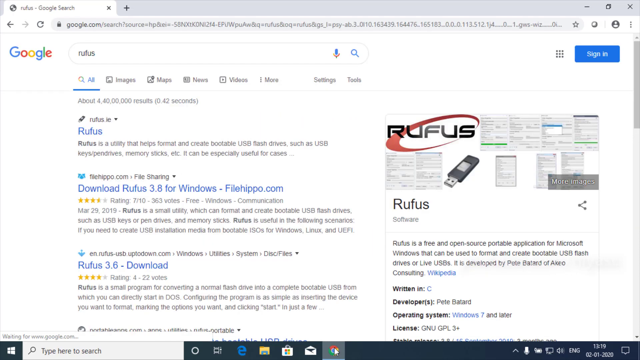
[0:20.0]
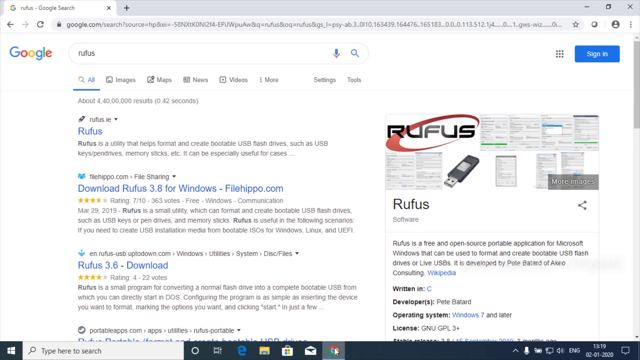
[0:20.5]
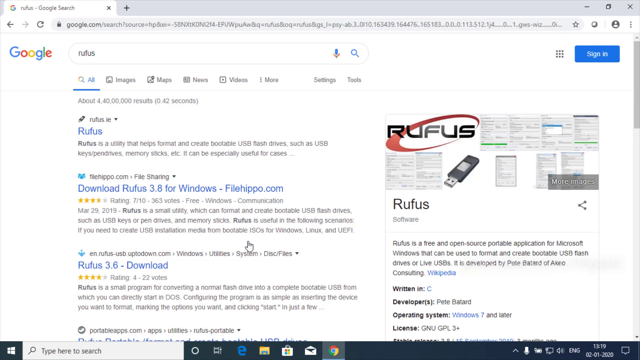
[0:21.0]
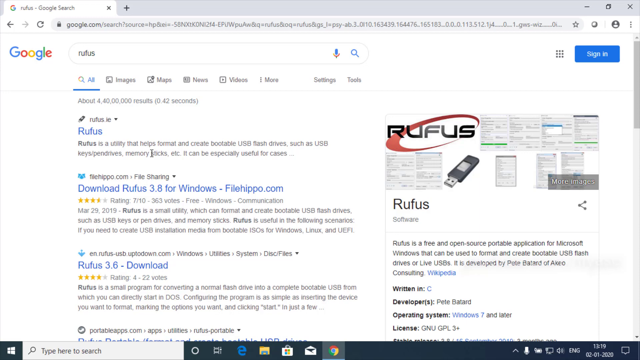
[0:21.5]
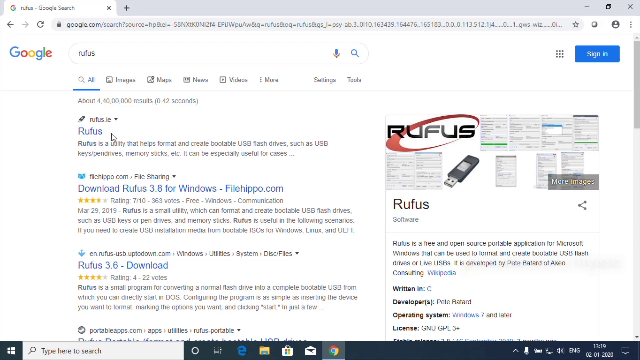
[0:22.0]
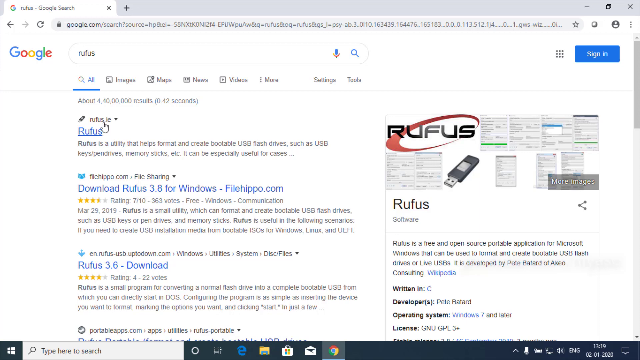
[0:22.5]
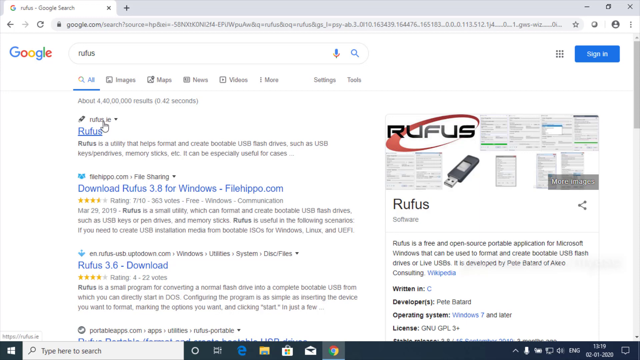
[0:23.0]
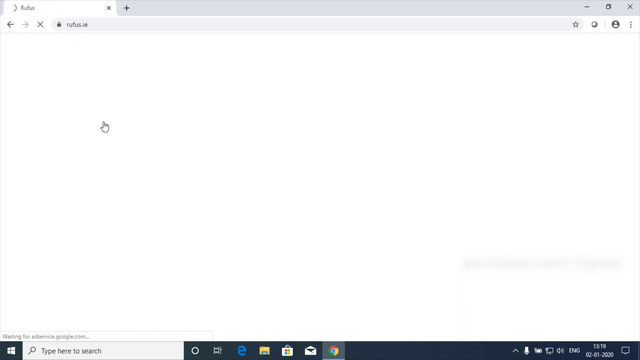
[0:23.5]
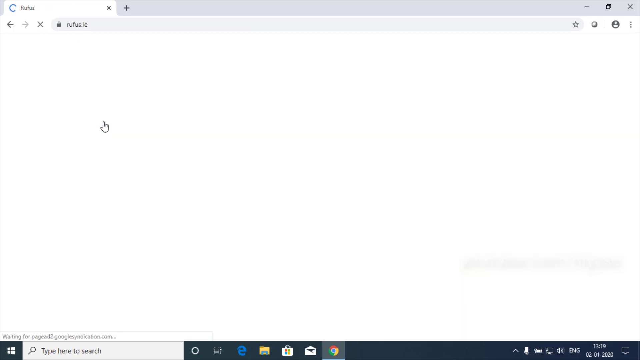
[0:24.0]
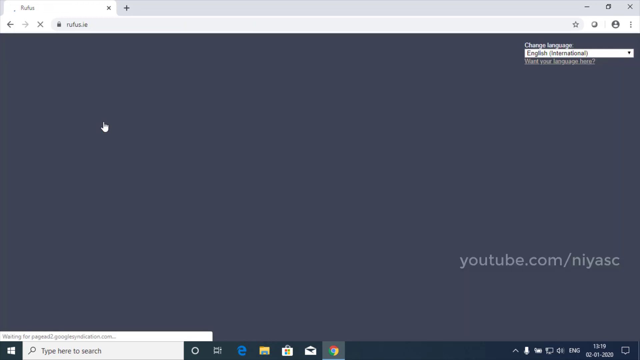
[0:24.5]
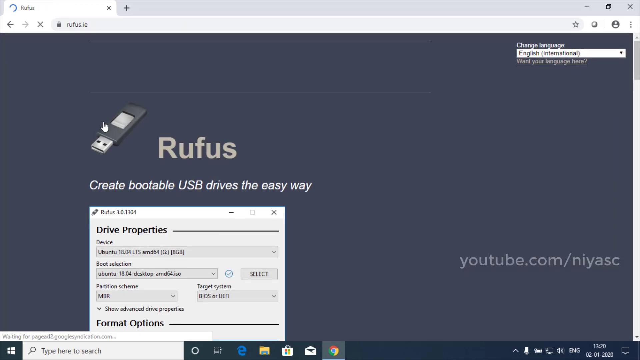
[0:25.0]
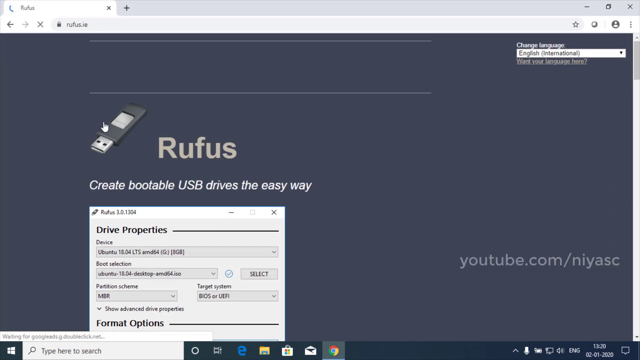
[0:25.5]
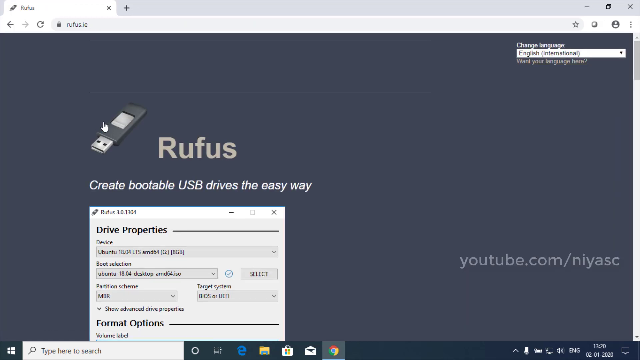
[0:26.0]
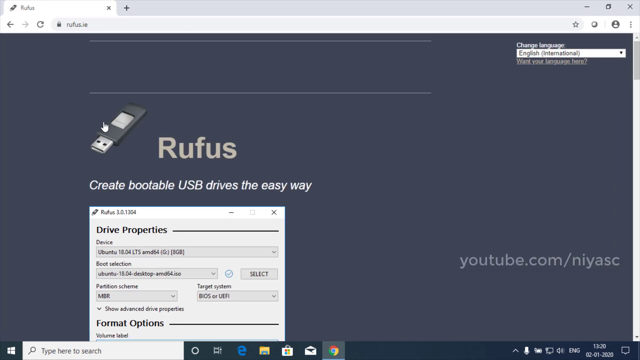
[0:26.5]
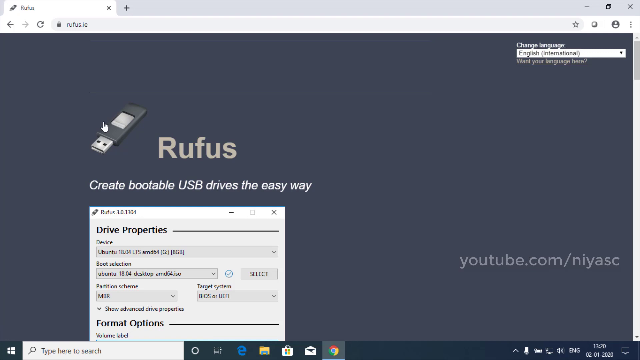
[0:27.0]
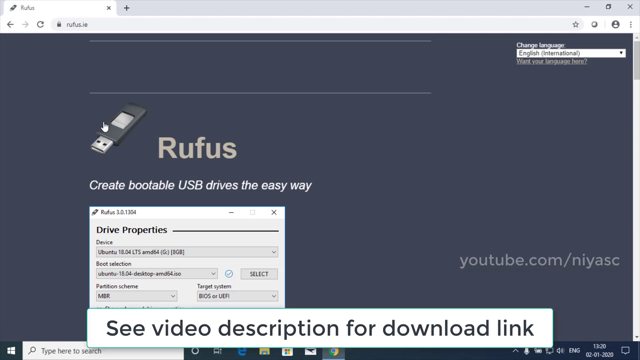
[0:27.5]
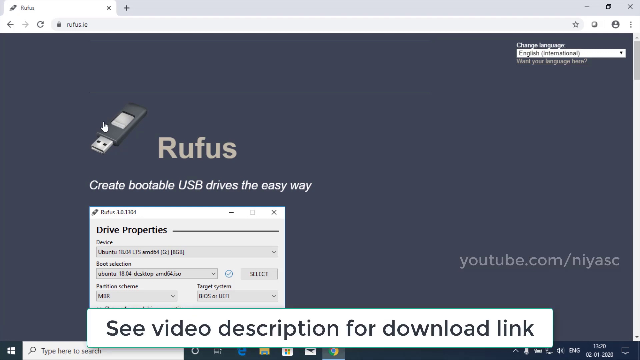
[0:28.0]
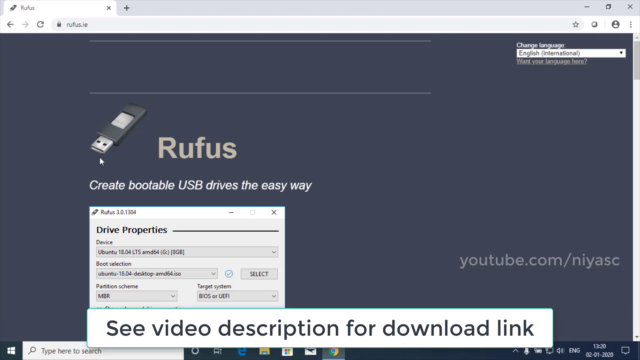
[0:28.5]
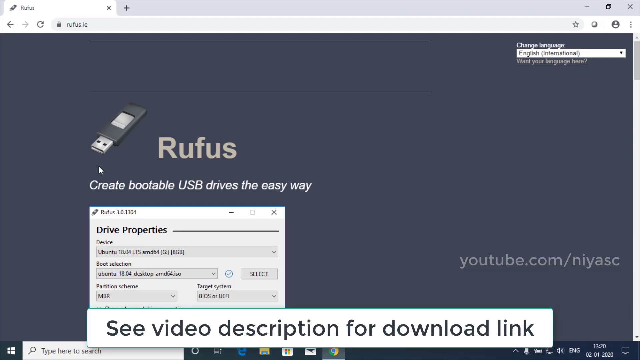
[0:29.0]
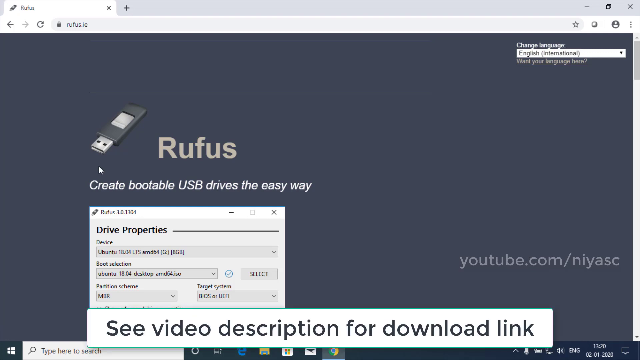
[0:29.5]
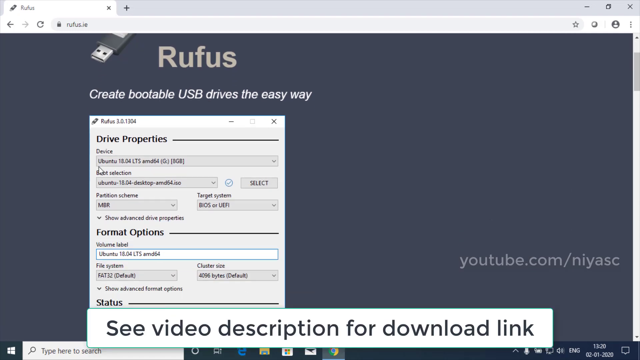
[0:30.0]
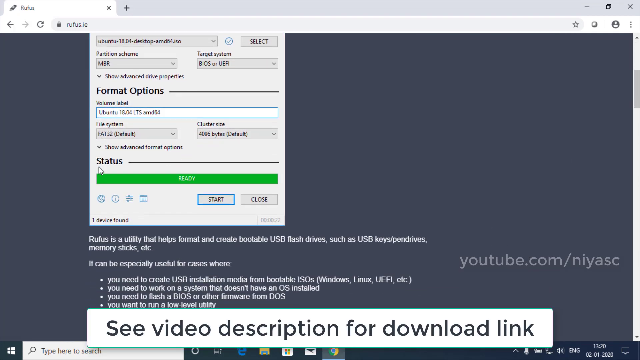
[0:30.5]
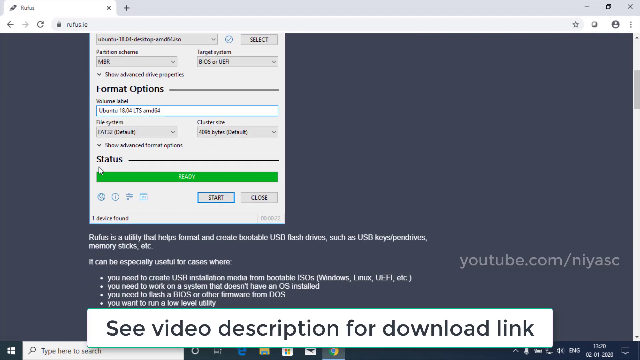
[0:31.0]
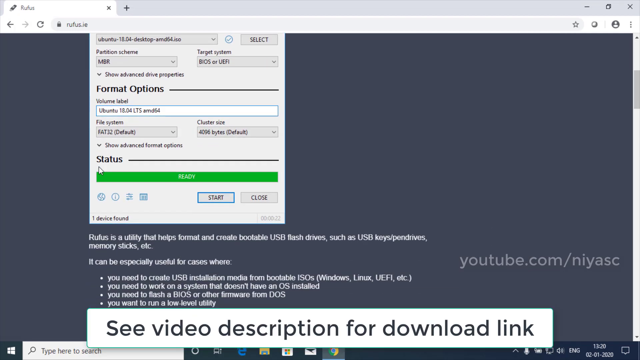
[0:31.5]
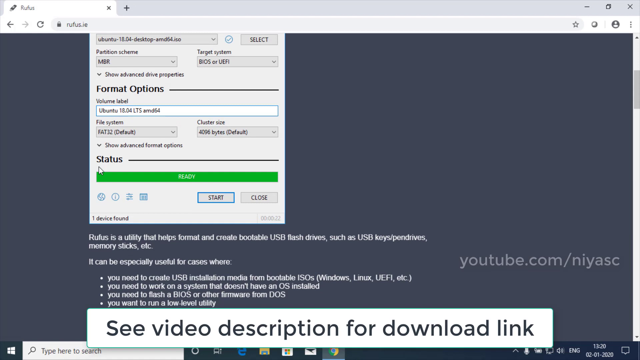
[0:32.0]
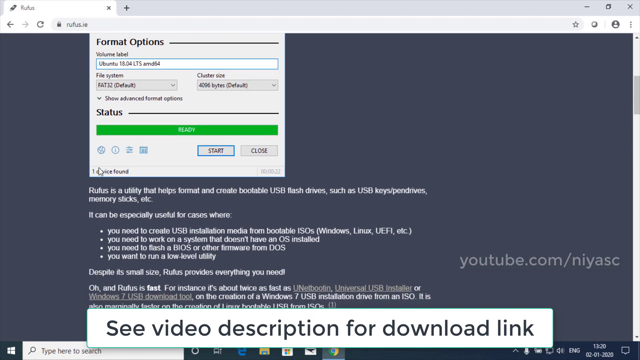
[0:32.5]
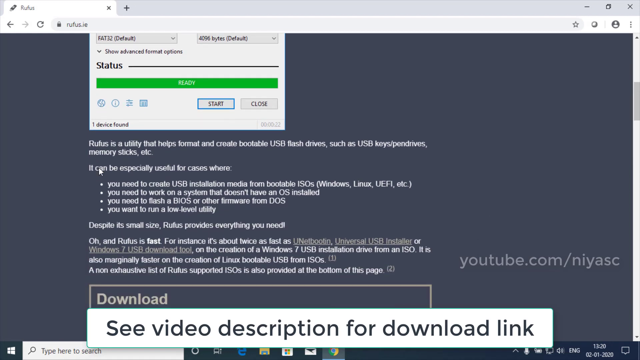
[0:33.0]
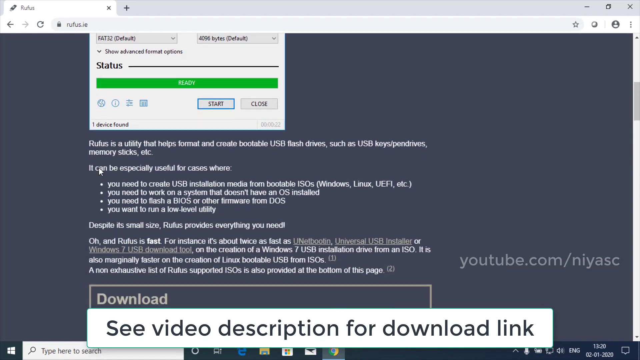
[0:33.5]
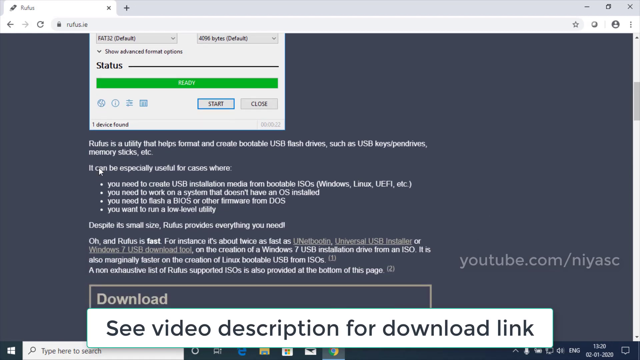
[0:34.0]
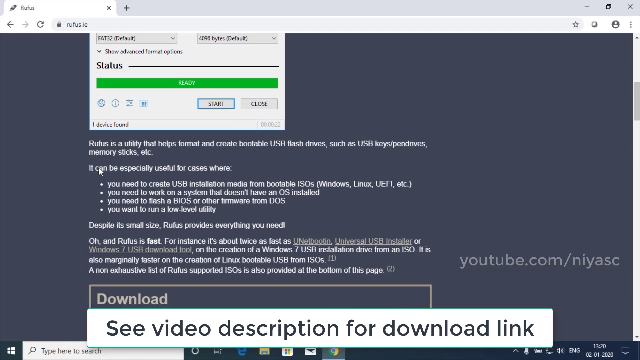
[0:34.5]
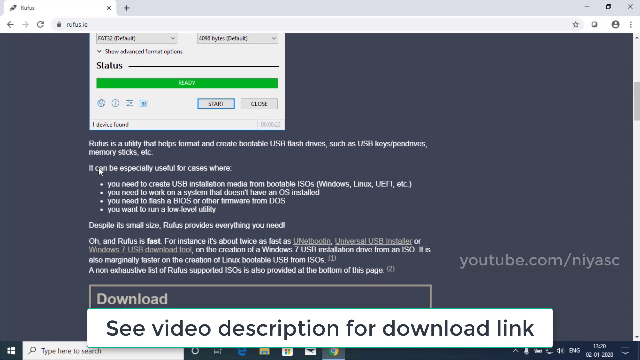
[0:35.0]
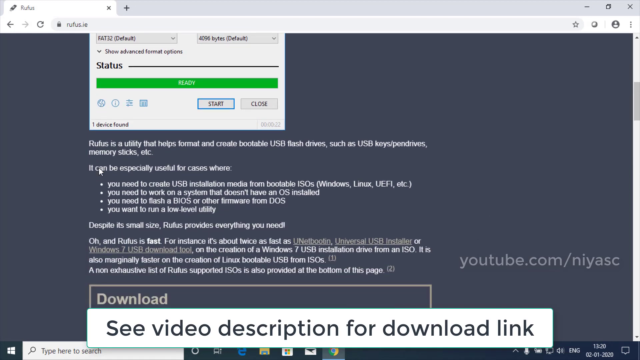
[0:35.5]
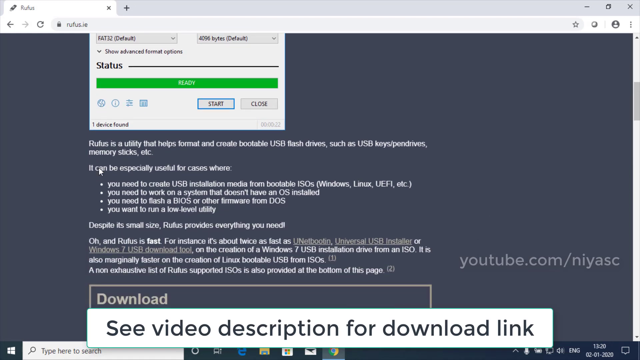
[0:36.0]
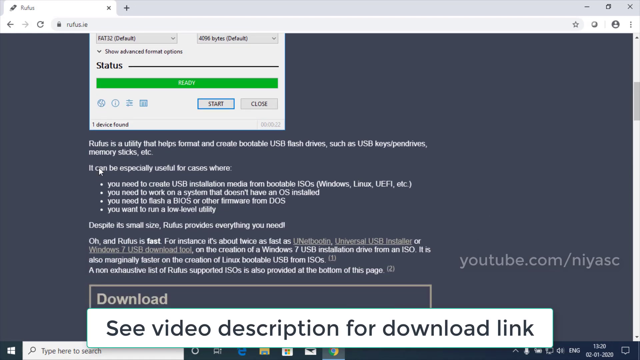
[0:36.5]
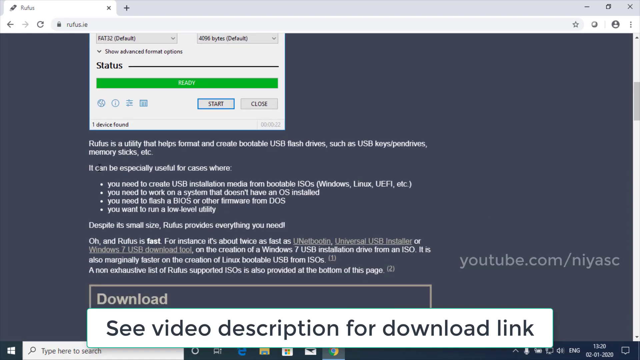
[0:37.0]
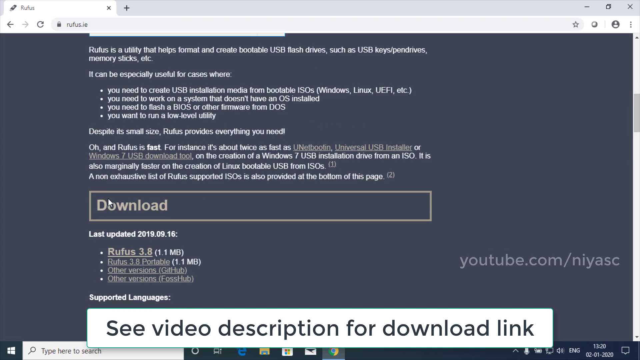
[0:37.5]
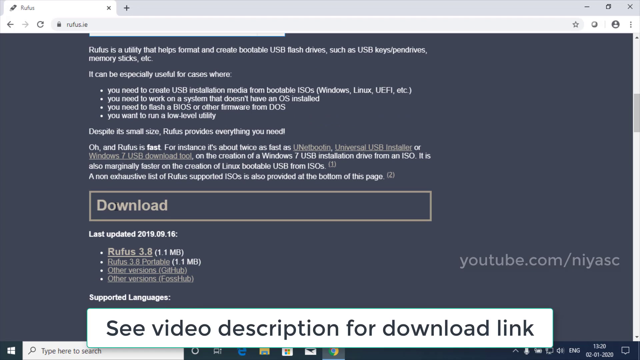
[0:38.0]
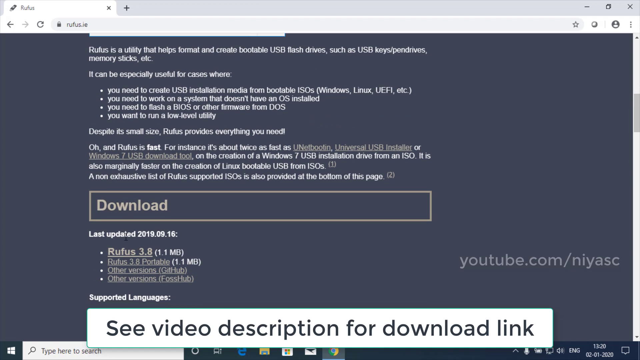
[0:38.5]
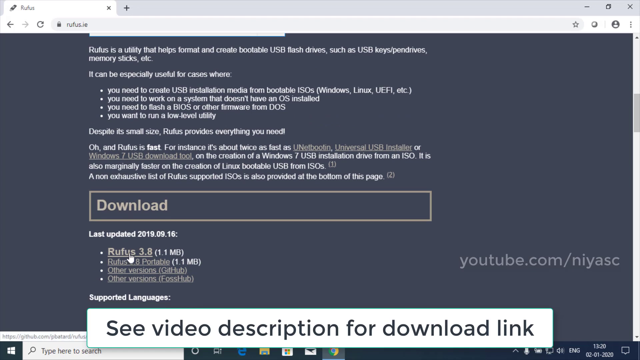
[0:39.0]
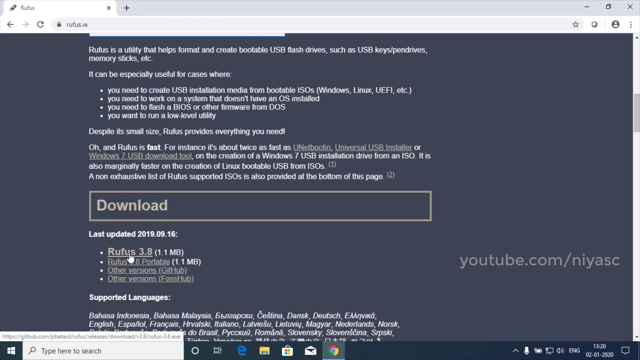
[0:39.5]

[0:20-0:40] On the Google results page, the user clicks the first link. The URL at the top of the screen is "rufus.ie". A gray home page loads with a flash drive image and the text "create bootable USB drives the easy way". Below is a white screen of an example, and below that the text "see video description for download link" in black on a white background. The user scrolls down. Toward the bottom of the example, below "Status", a green rectangle reads "Ready", with two buttons below it, "Start" and "Close". Below the example is a series of white text including four bullet points. Further down there appears to be a Download button, followed by the text "last updated Rufus version 3.8".